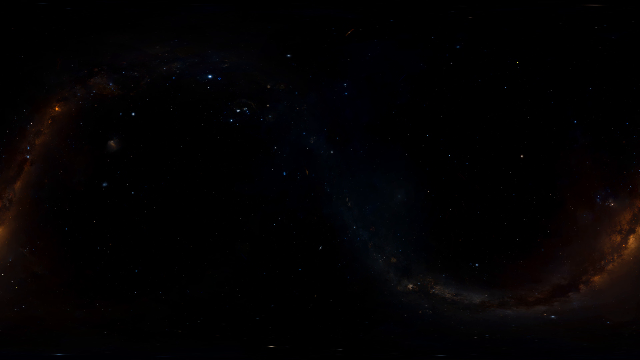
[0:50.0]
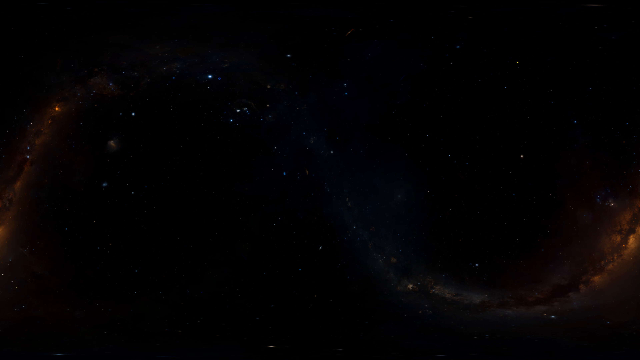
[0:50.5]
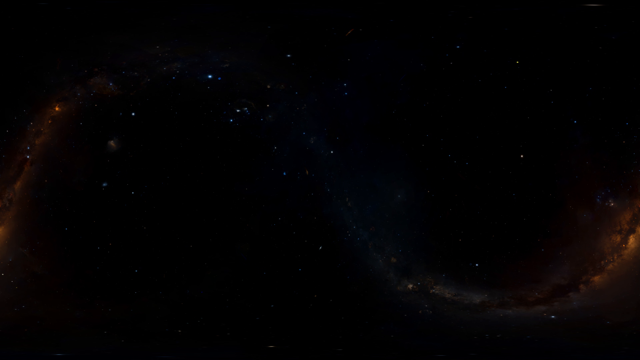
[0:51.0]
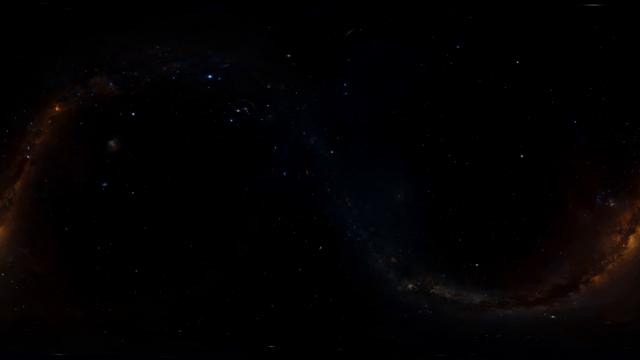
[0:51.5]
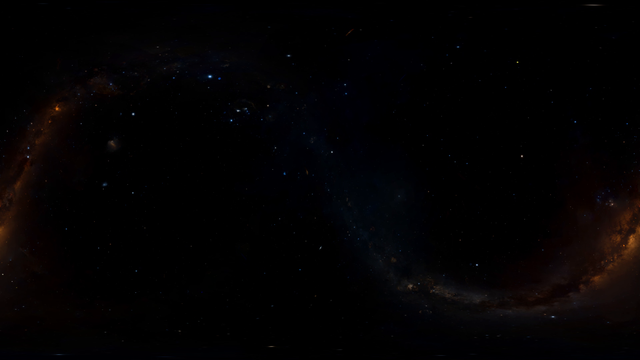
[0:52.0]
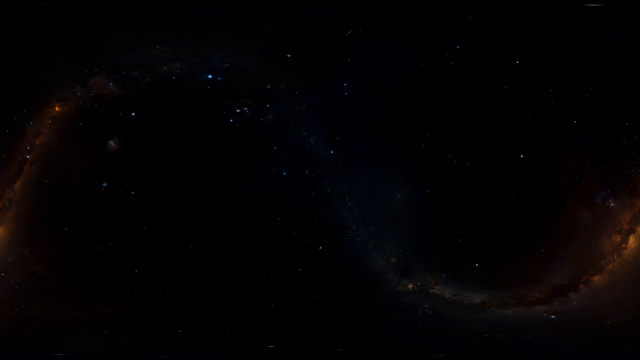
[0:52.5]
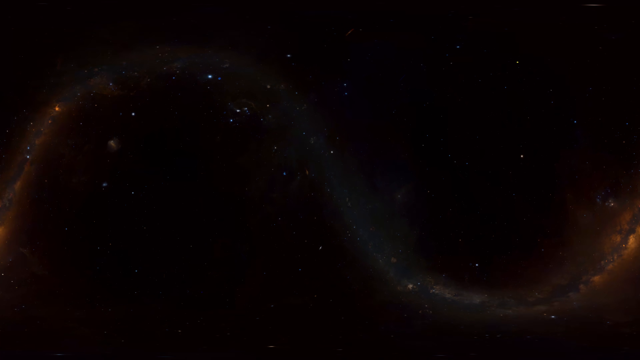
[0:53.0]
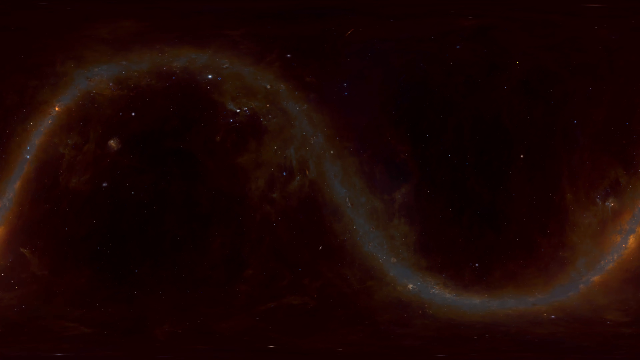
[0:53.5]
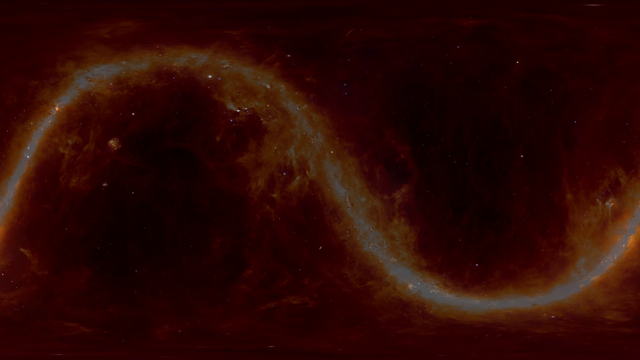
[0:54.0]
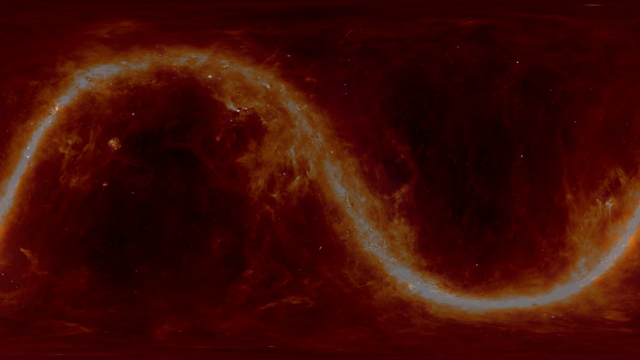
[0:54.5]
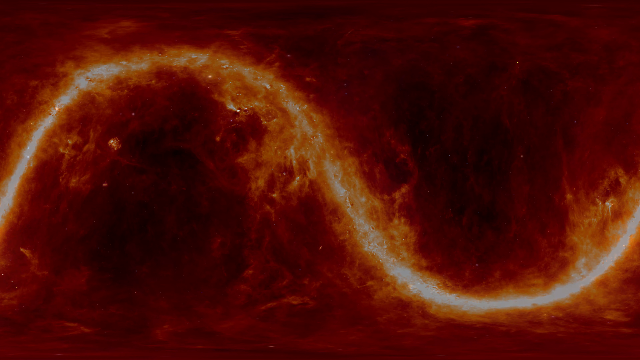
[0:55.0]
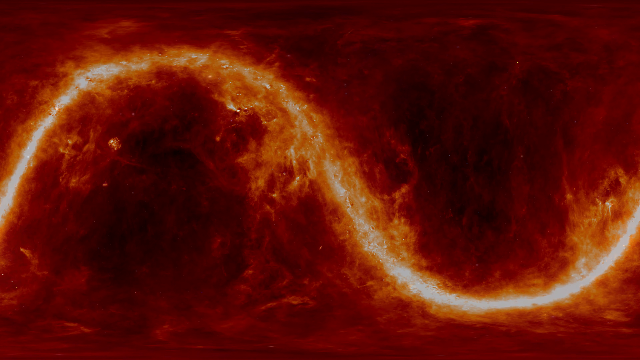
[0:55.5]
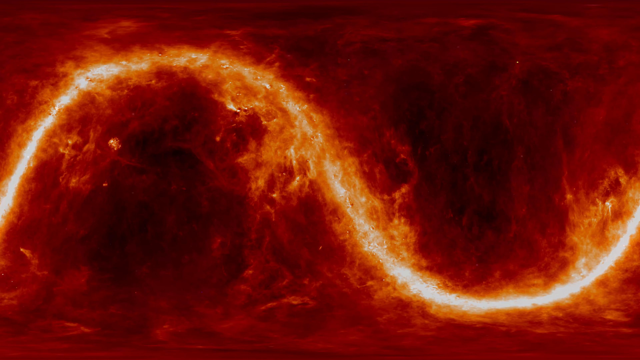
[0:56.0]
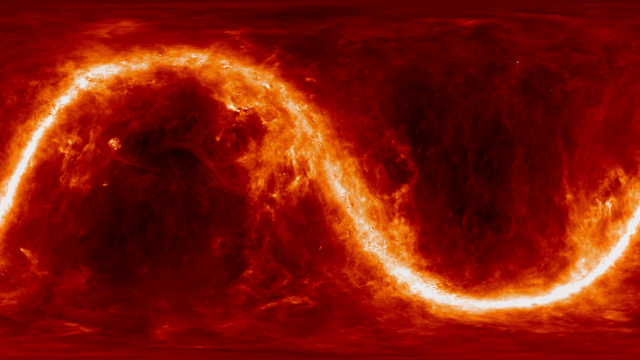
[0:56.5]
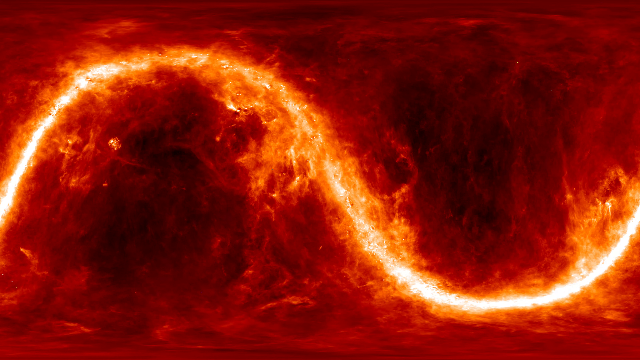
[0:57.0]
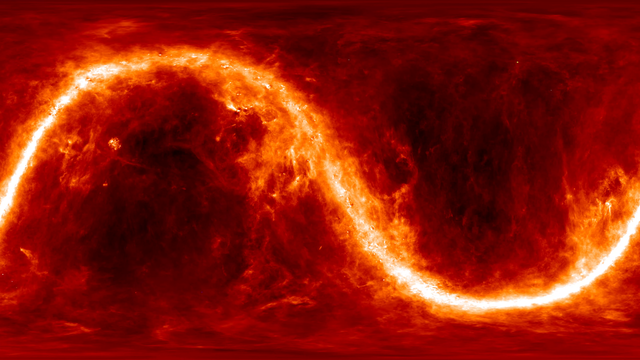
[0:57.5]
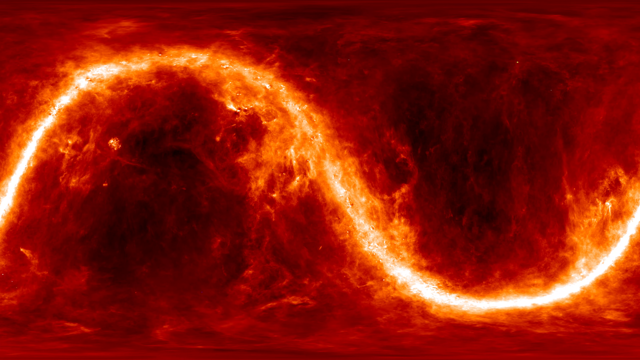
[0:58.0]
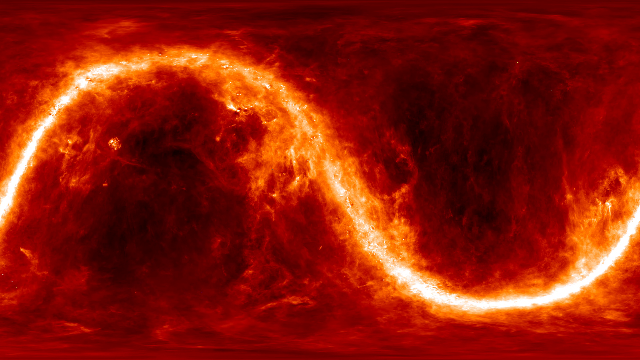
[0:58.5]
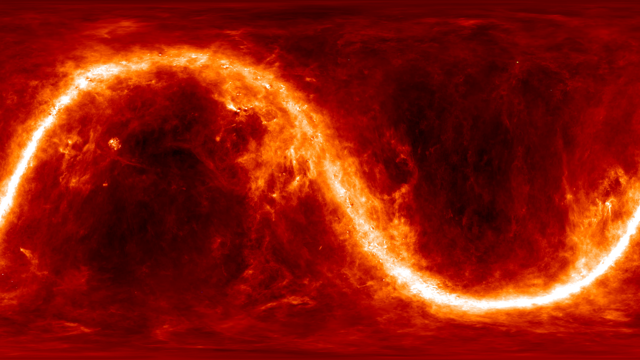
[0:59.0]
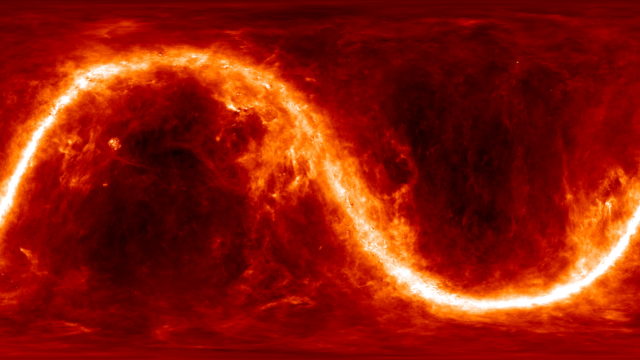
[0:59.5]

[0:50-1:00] A very dark screen looks like a view of outer space, with dots and specks of stars that look very far away, as if in a distant galaxy. The stars look white or bluish, but they are such tiny specks that their actual color and number are almost difficult to make out. They are evenly dispersed over the dark space. In the lower right corner are faint plumes of what looks like orange gas or clouds. After a few seconds, a wave-like line appears on the screen: a curved wave that goes up and then down. The wave looks whitish and is surrounded by flames, a static flame effect that grows deeper and deeper red and brighter and brighter.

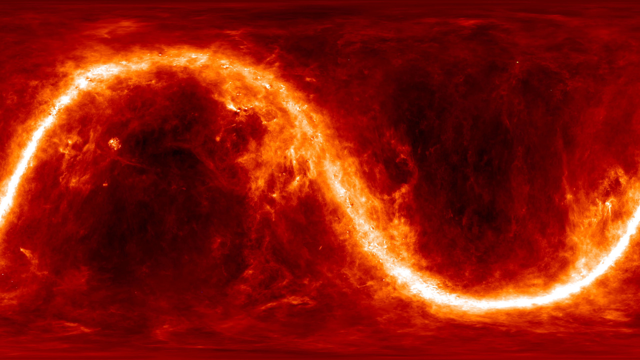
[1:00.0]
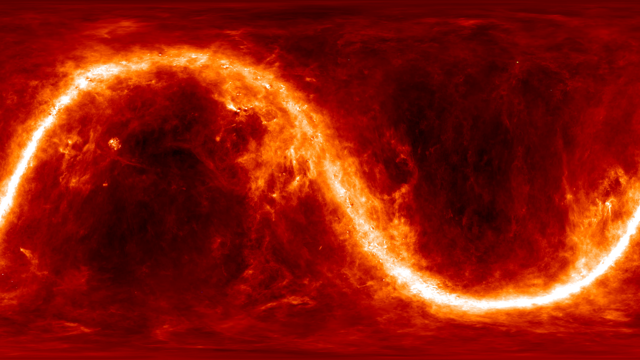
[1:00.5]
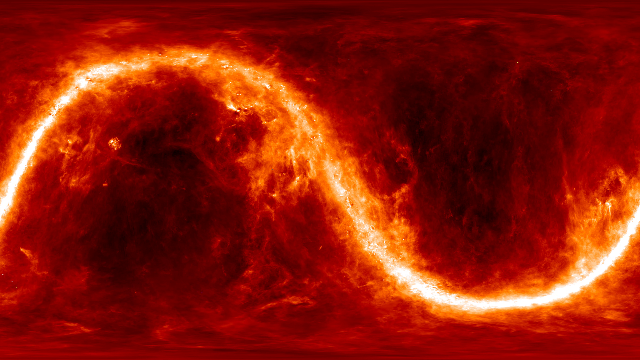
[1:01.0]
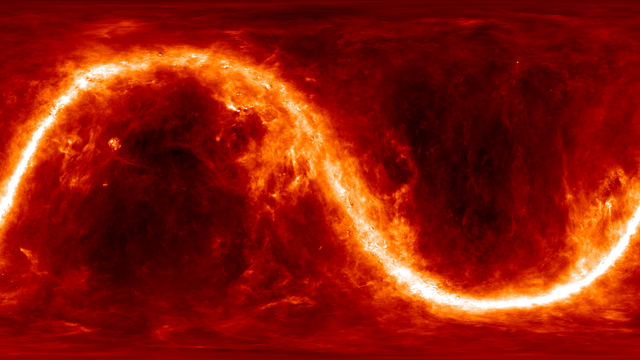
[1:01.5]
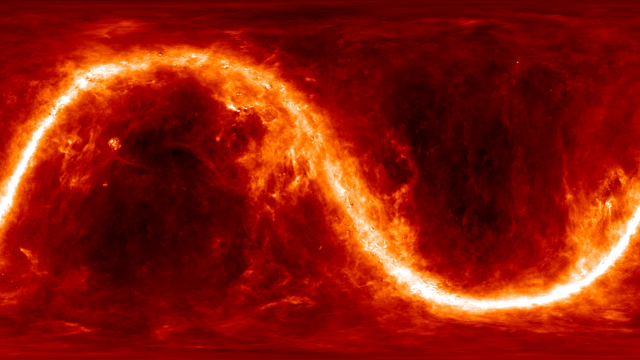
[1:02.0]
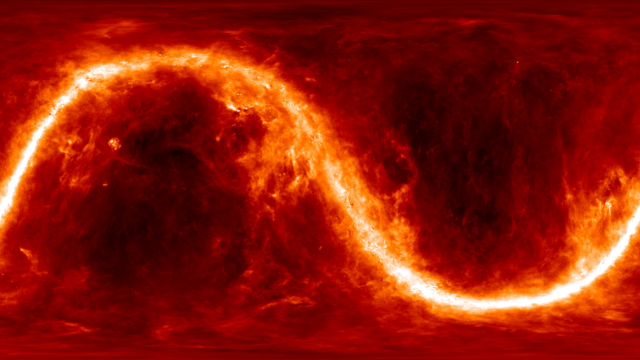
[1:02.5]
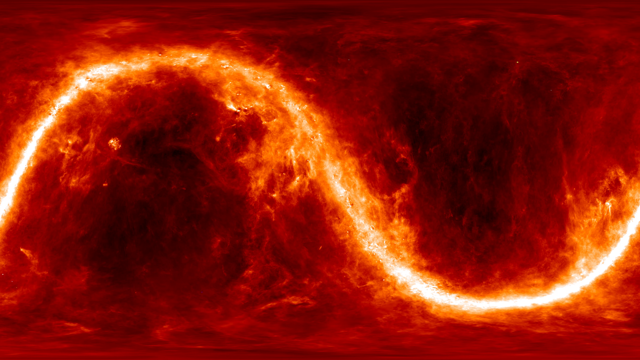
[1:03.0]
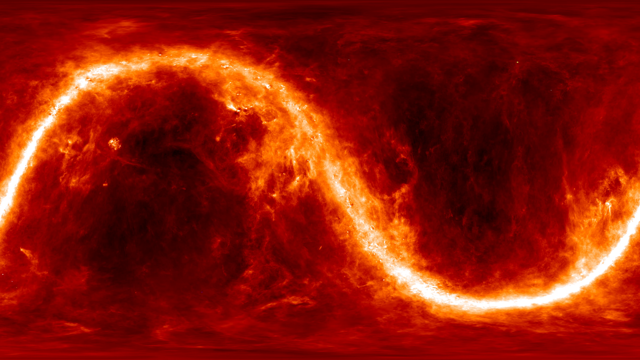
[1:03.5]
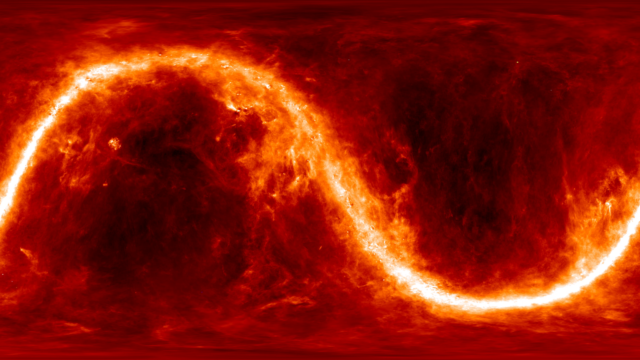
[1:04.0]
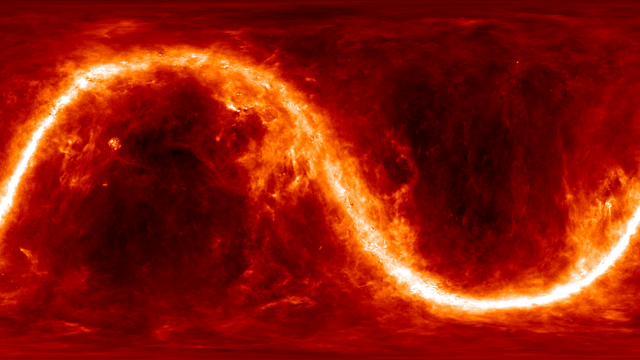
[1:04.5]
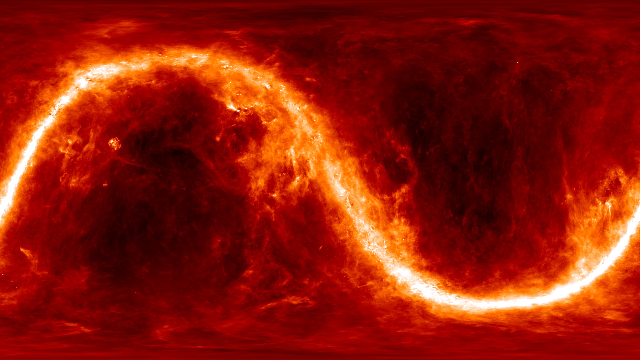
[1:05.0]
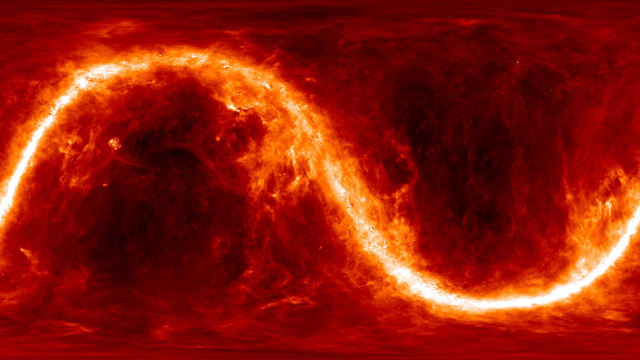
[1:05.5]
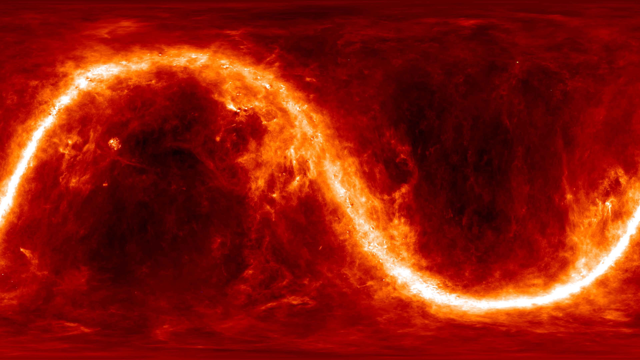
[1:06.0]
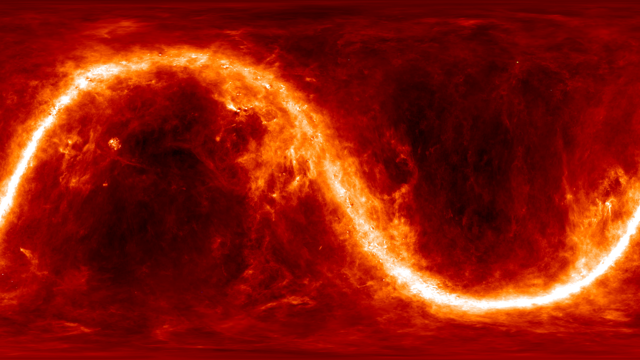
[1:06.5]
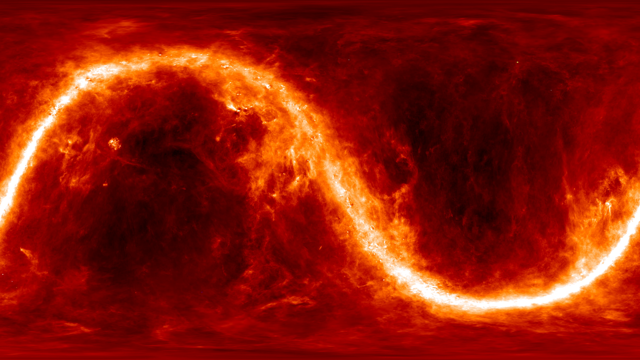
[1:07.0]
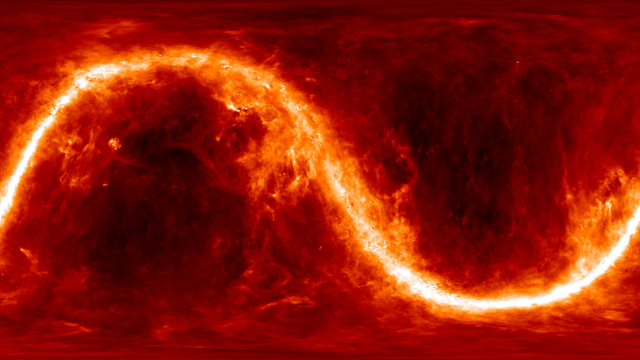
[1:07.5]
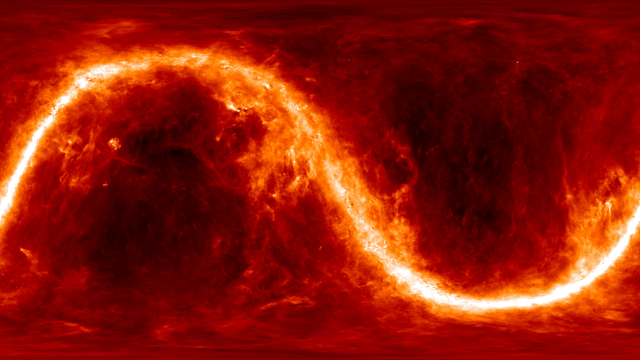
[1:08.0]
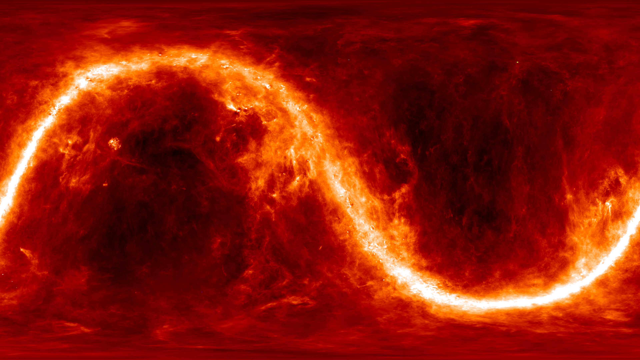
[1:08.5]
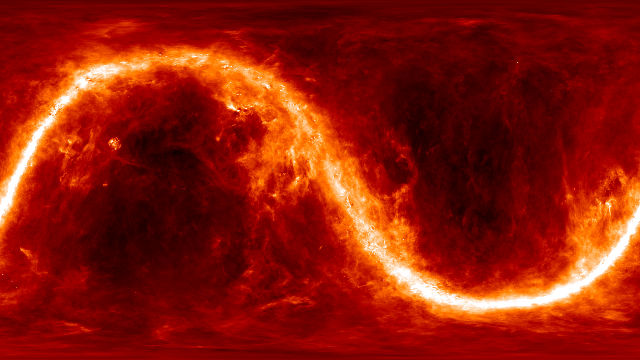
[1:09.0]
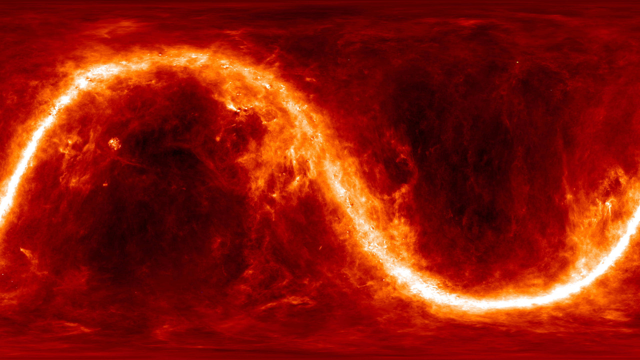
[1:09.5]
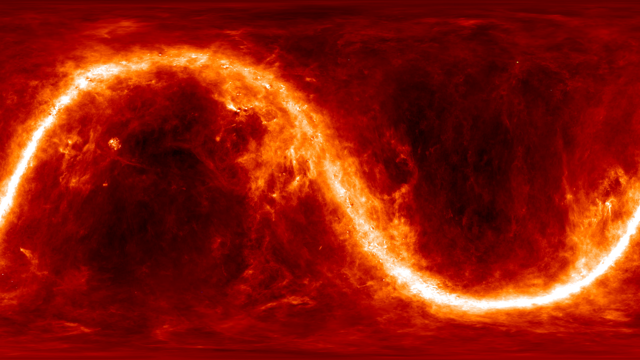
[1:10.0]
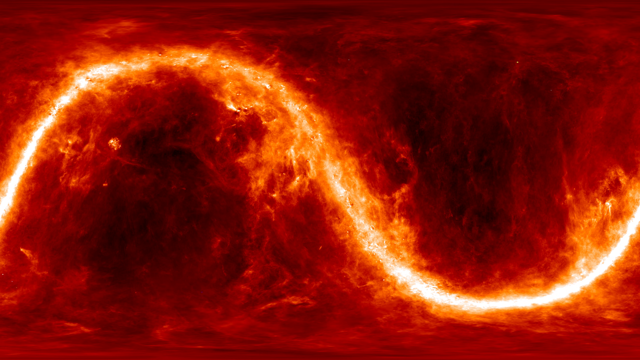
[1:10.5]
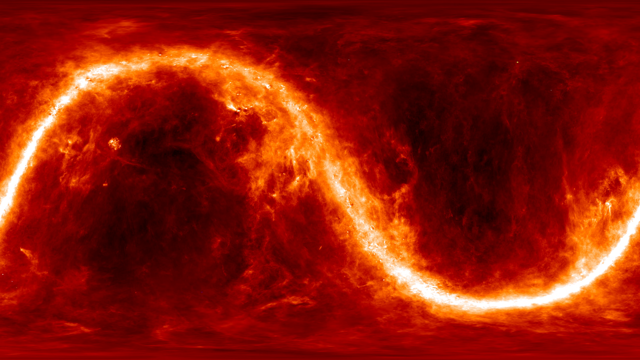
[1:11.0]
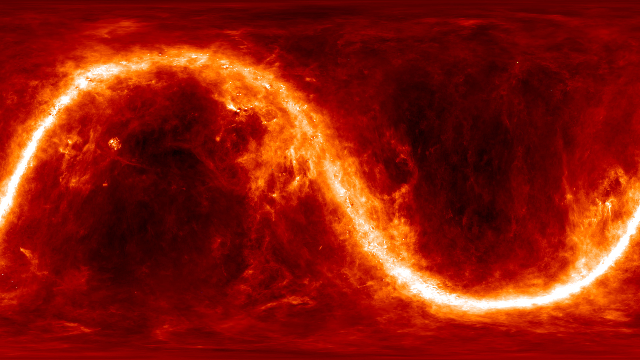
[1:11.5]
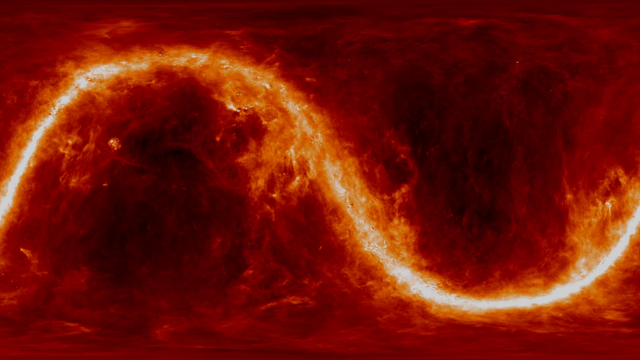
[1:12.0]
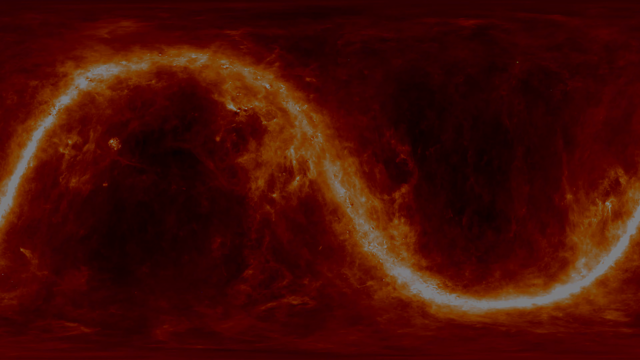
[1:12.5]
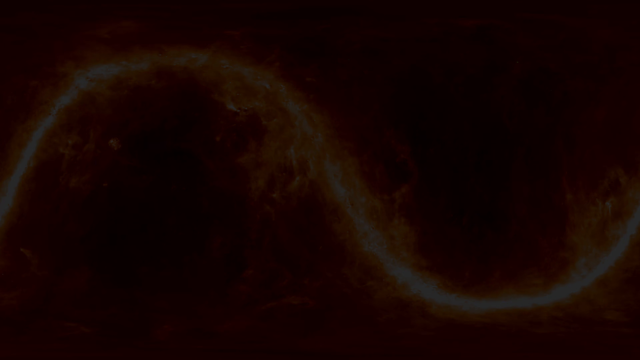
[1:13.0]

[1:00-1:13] An image that looks like a waveform is on screen. The waveform is curved, sloping up, descending on the other side and beginning to go up again. It is whitish and surrounded by what look like yellowish-reddish flames, making the view look like a very hot inferno. In the hollows of the curved waveform there is a slightly darker part. The waveform looks like a sideways letter S.